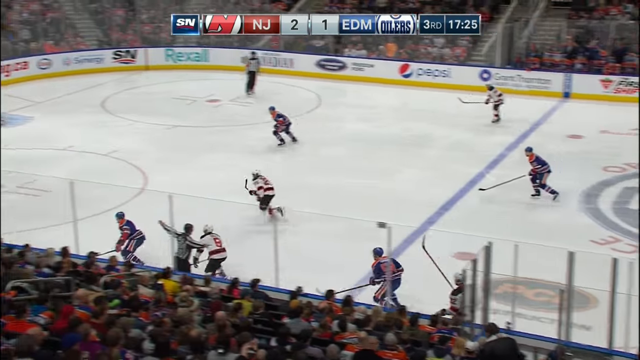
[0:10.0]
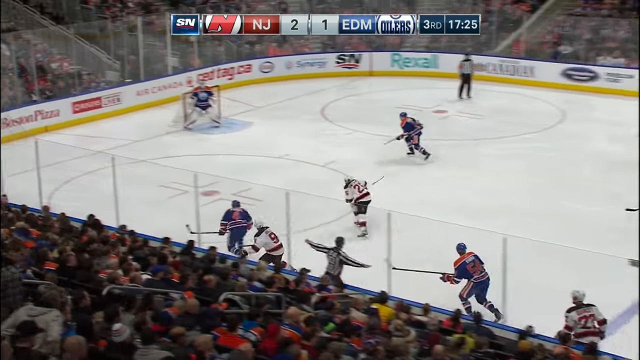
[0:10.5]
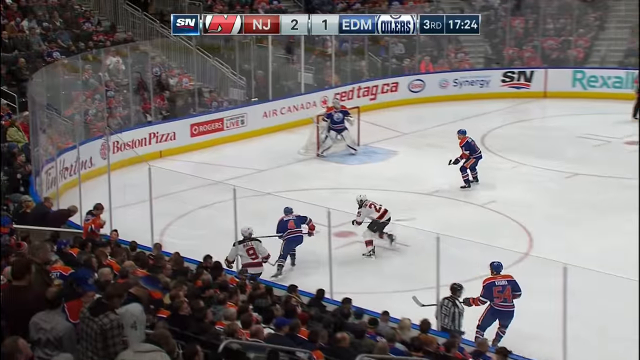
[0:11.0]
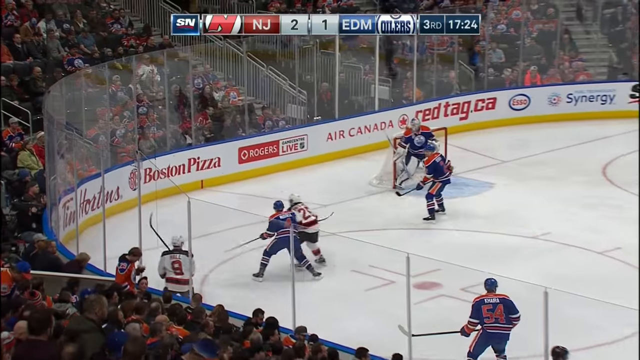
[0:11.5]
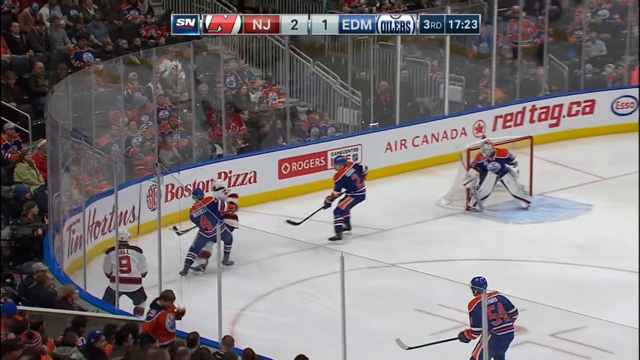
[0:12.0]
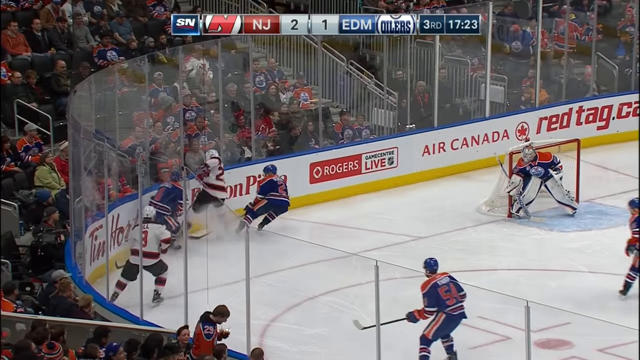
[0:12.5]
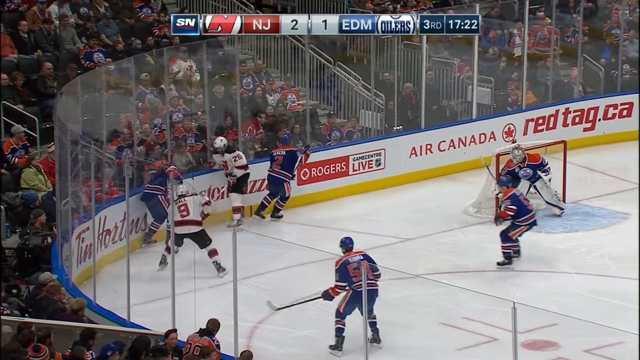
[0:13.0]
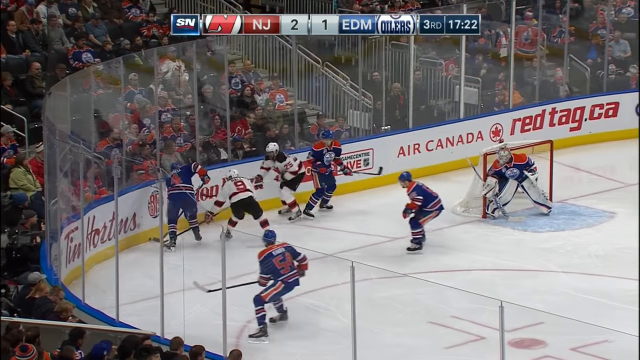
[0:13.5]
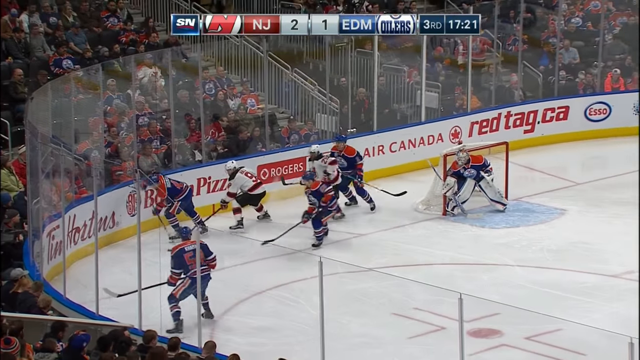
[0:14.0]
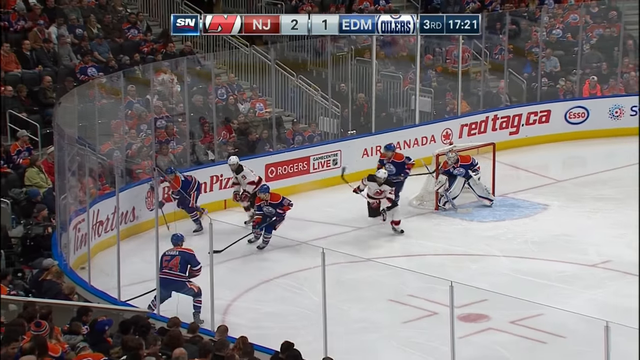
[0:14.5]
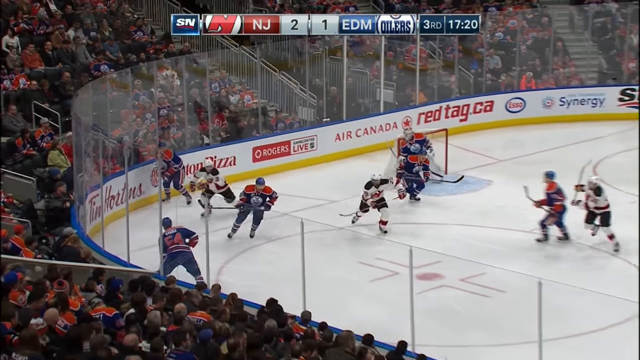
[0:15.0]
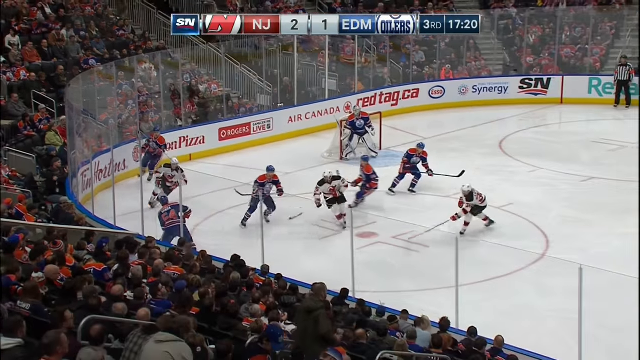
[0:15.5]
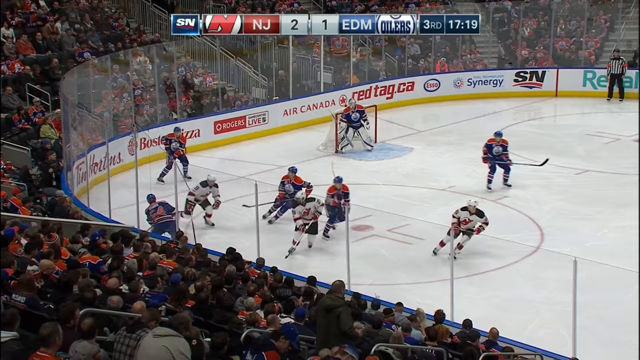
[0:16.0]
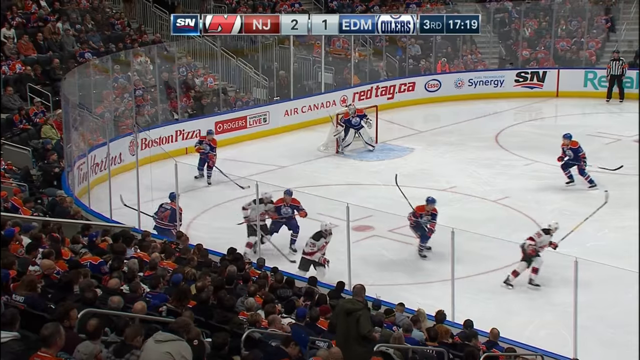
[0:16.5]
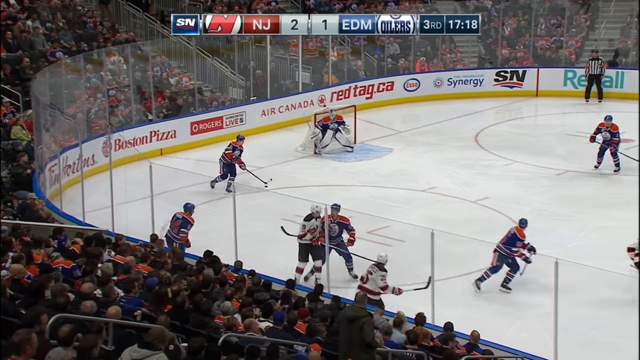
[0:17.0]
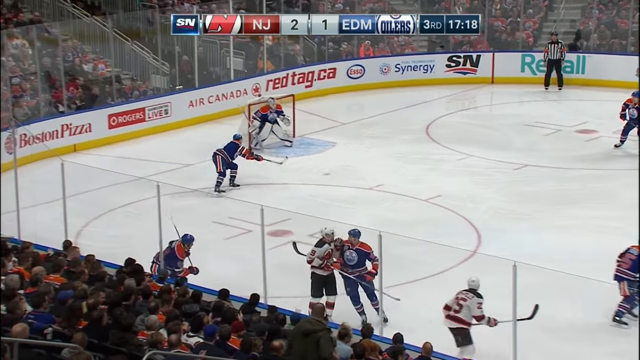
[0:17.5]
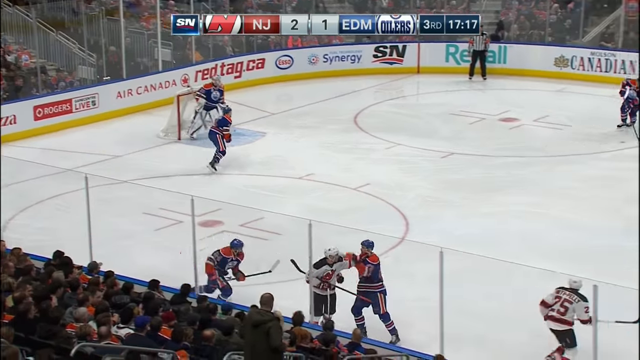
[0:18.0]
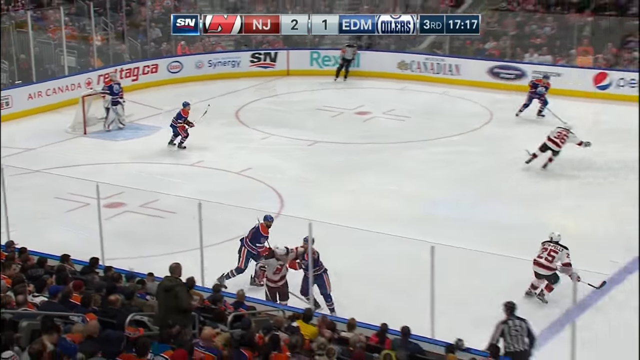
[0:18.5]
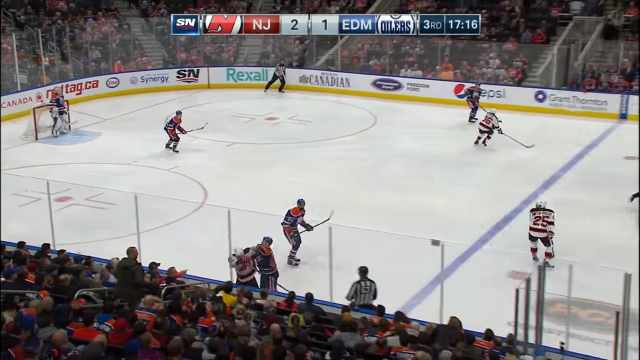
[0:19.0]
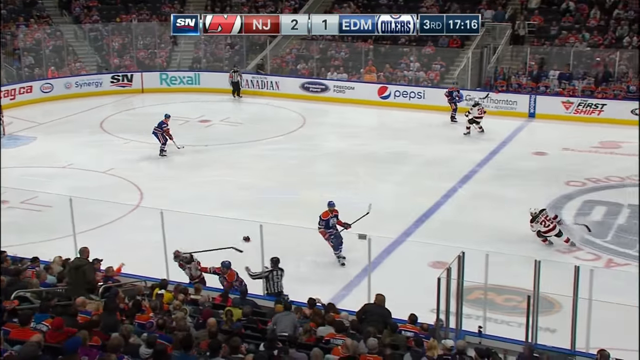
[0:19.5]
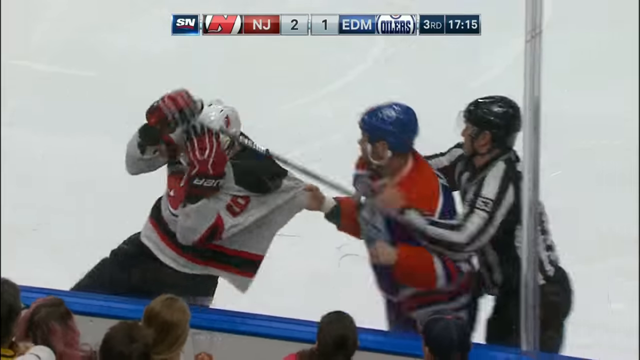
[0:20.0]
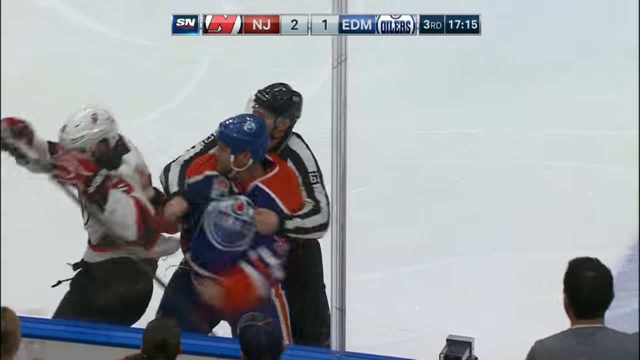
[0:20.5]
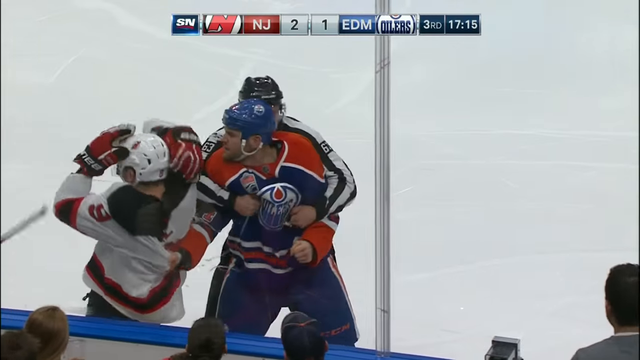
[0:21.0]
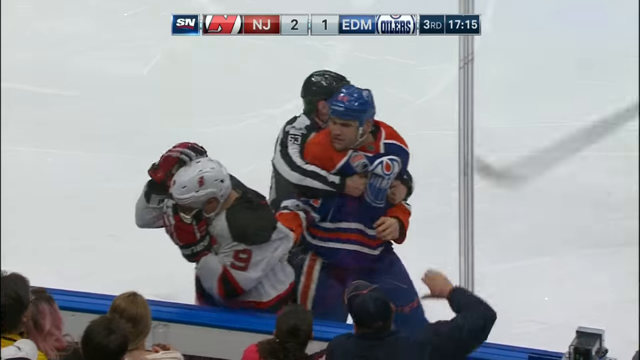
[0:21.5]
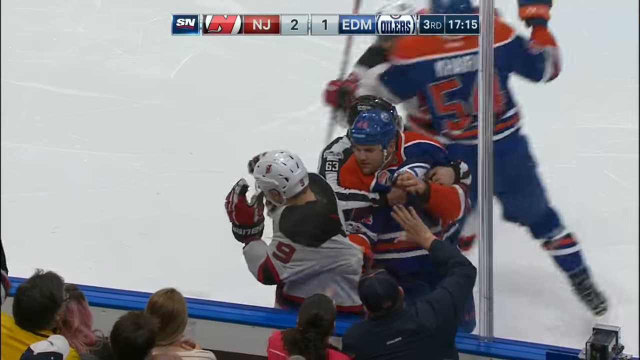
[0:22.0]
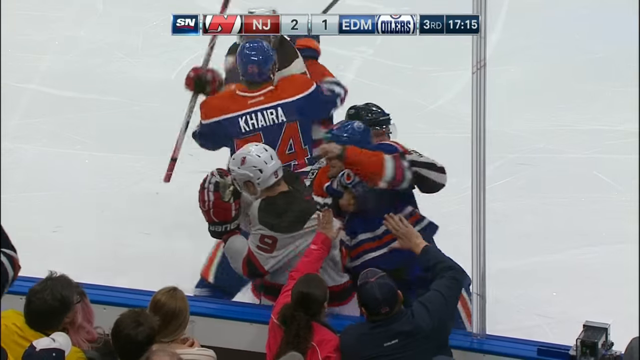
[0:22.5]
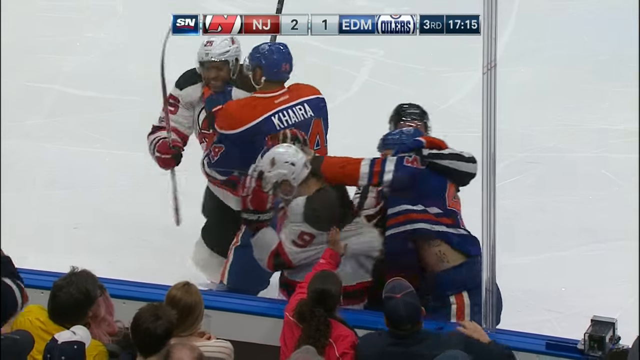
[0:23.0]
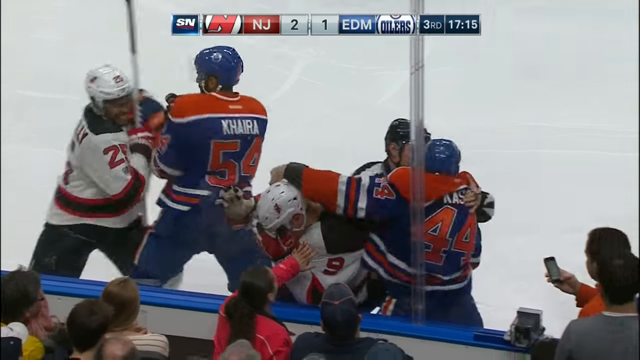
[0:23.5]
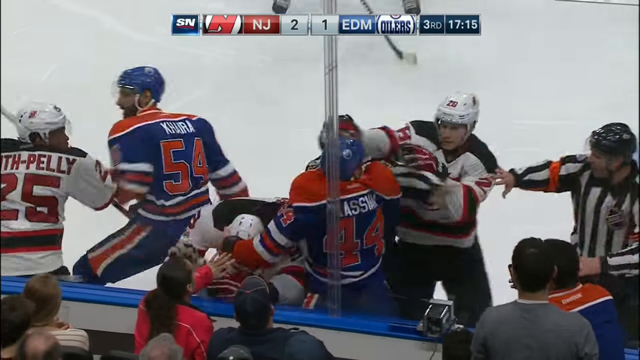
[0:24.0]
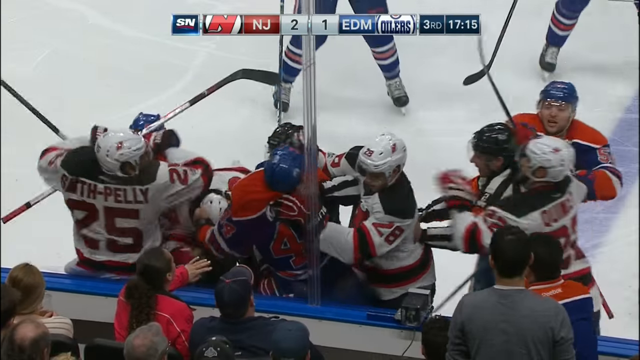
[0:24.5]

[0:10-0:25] On-screen text reads "Cassian wants revenge"; Cassian appears to be an Edmonton Oilers player. He grabs the shirt of number five on the New Jersey Devils, then throws a hard left punch, a left hook, that hits the Devils player square in the jaw. The players wear padding and helmets. Referees come in and try to break it up. A Devil and an Oiler are locked up until the referees finally separate them. The fight apparently started when a Devils player knocked the Oilers captain down. A shot shows the captain of the Devils sitting on the bench.